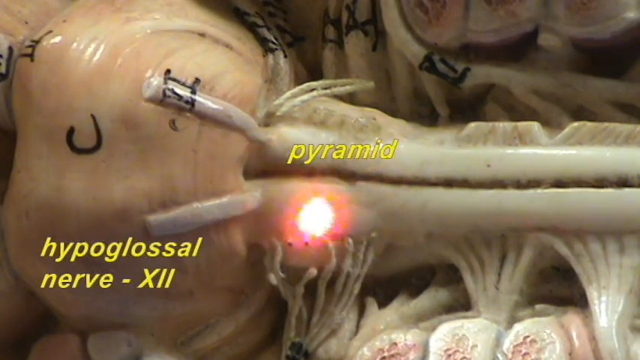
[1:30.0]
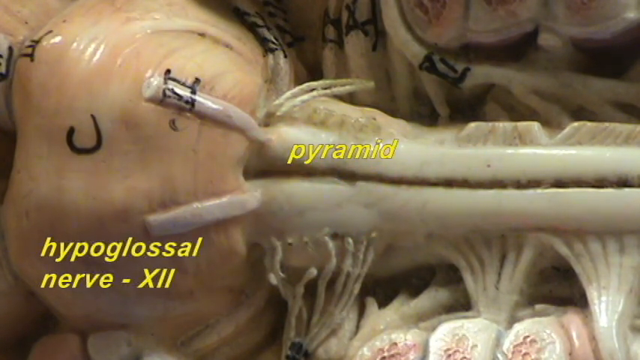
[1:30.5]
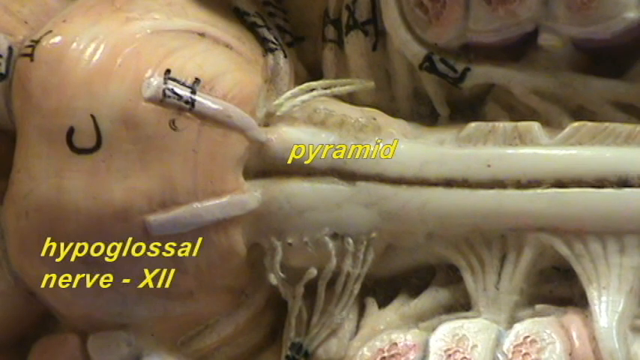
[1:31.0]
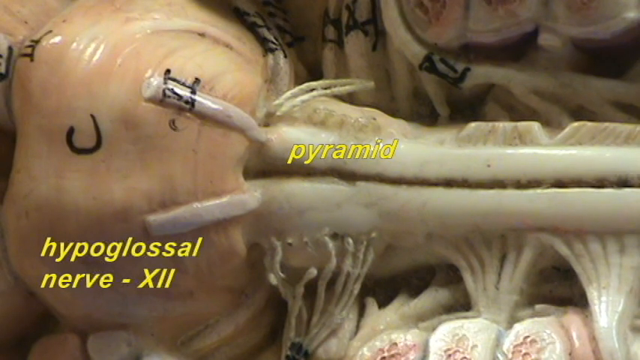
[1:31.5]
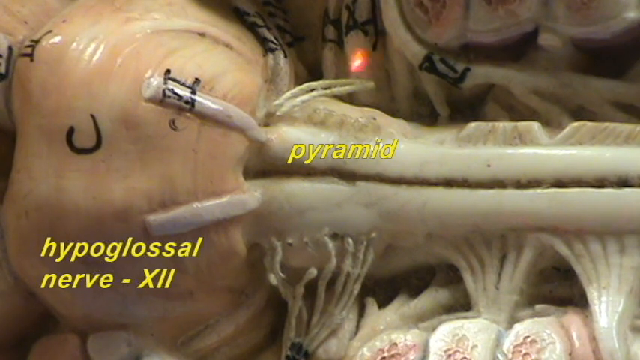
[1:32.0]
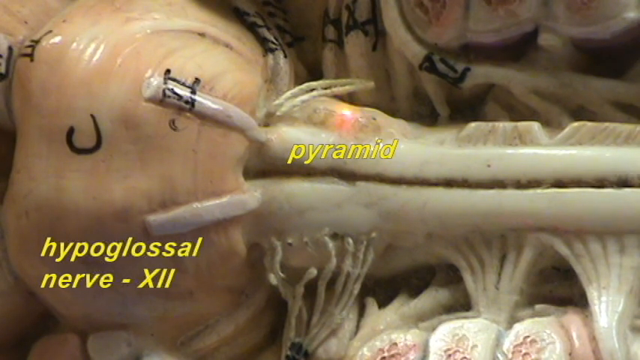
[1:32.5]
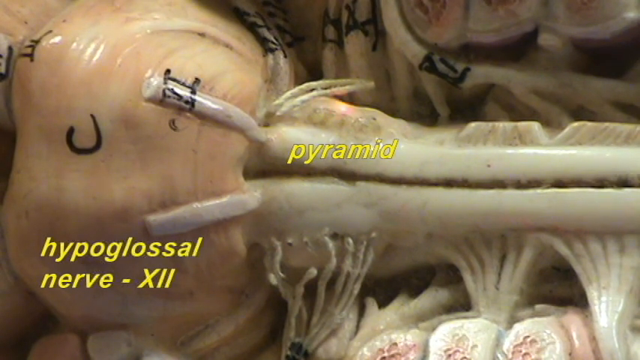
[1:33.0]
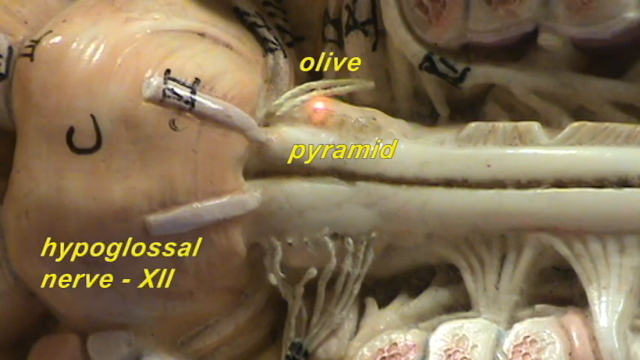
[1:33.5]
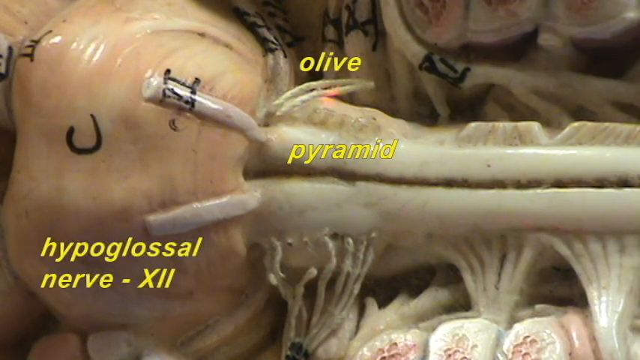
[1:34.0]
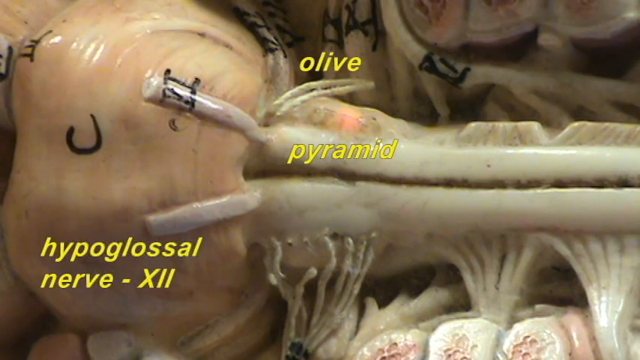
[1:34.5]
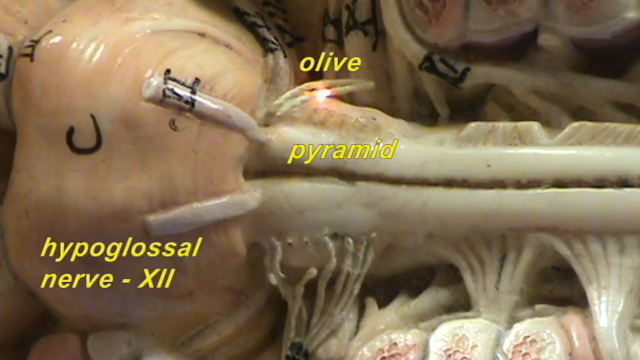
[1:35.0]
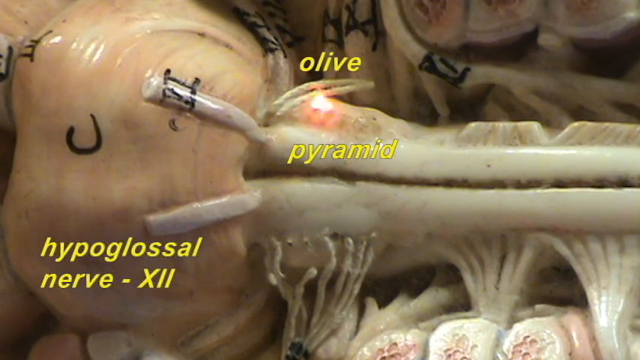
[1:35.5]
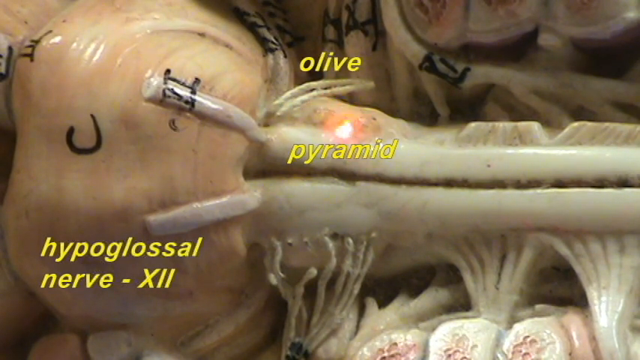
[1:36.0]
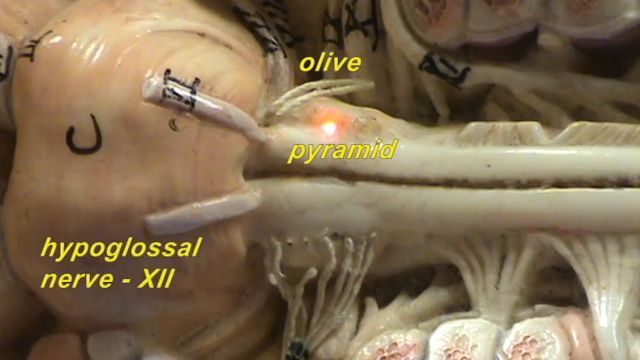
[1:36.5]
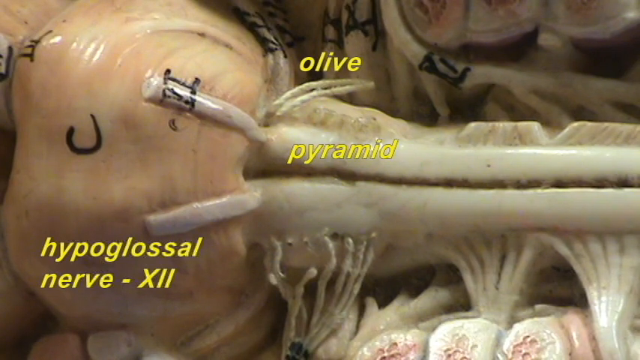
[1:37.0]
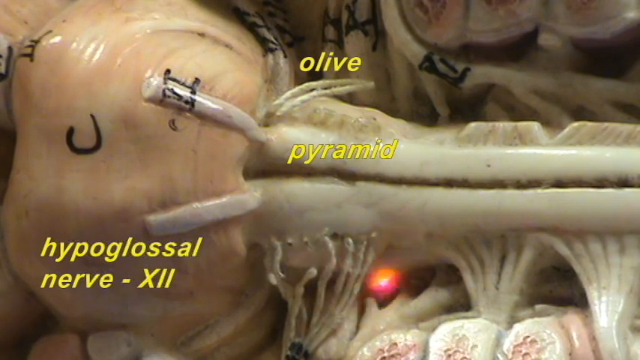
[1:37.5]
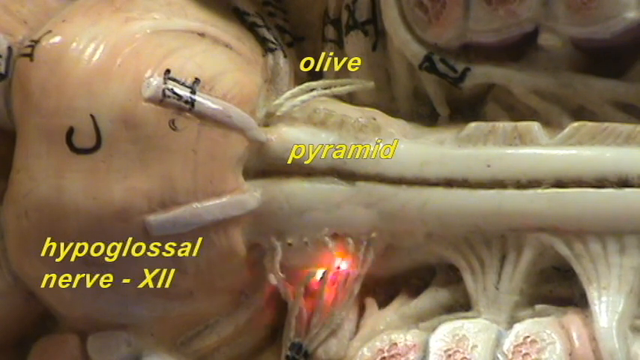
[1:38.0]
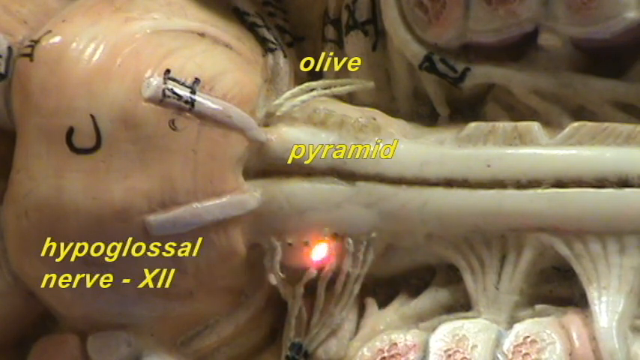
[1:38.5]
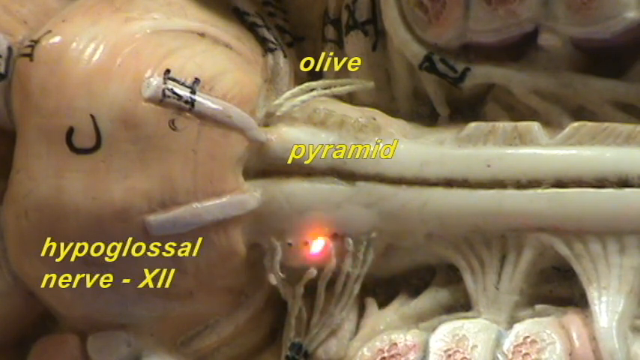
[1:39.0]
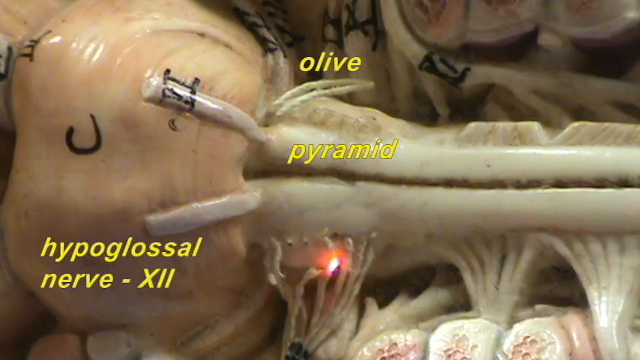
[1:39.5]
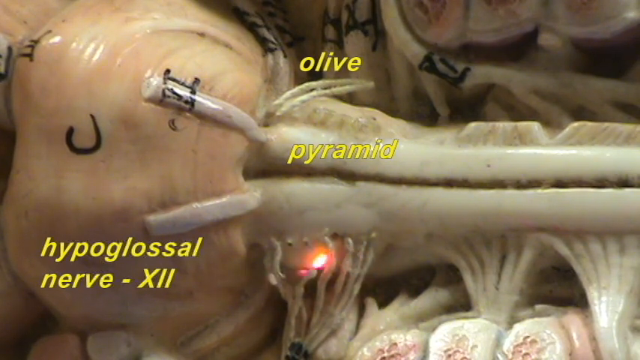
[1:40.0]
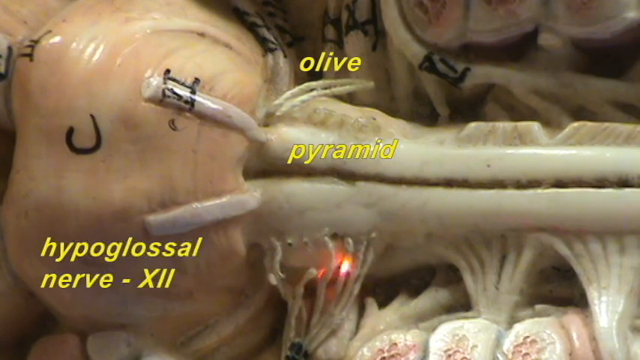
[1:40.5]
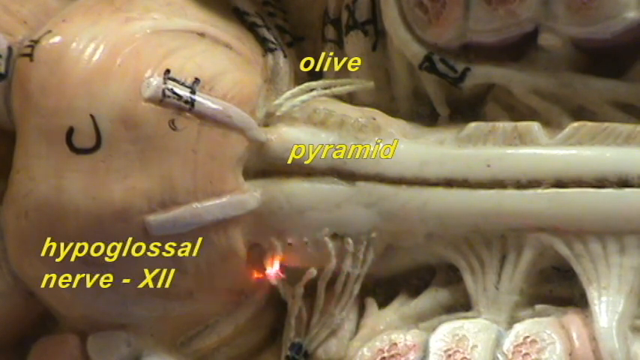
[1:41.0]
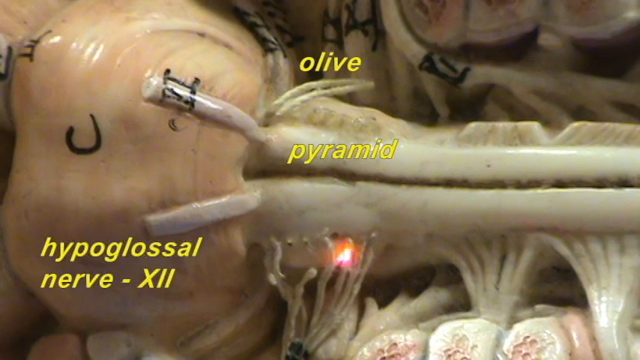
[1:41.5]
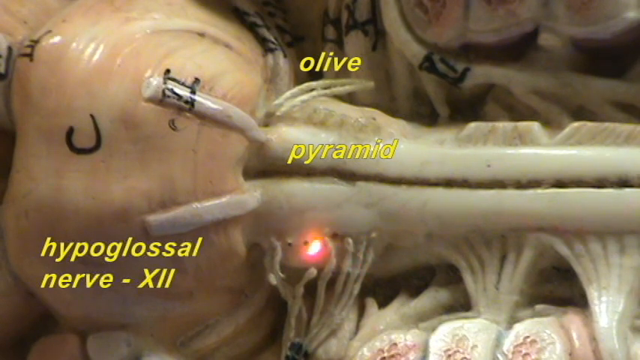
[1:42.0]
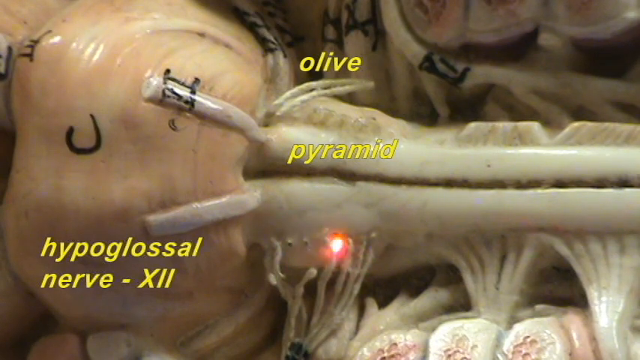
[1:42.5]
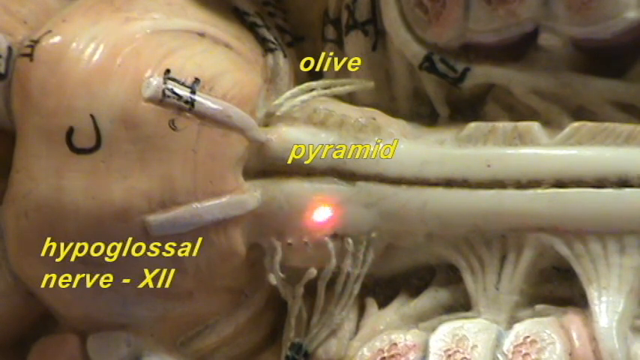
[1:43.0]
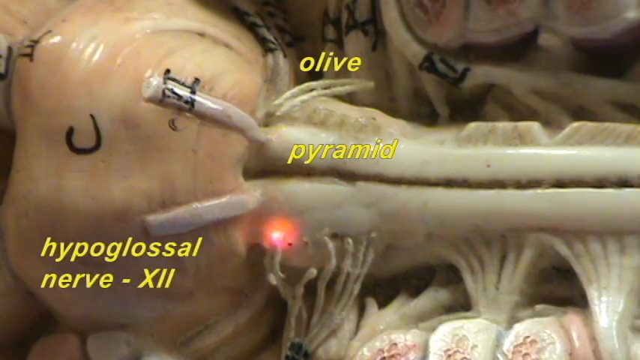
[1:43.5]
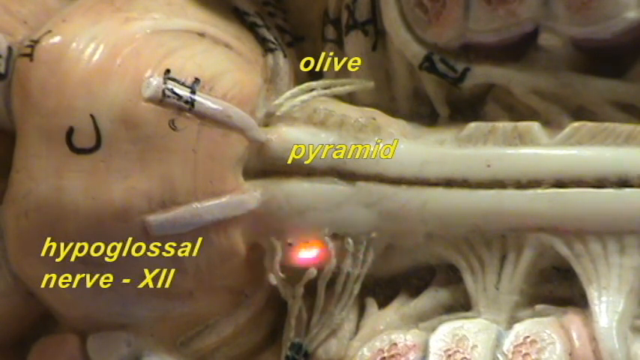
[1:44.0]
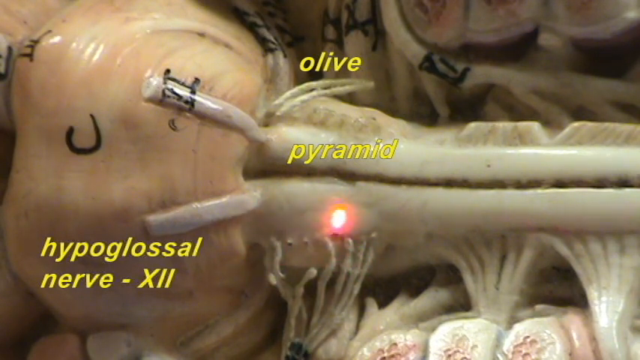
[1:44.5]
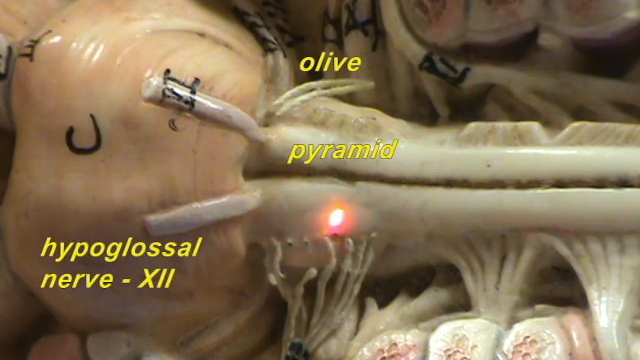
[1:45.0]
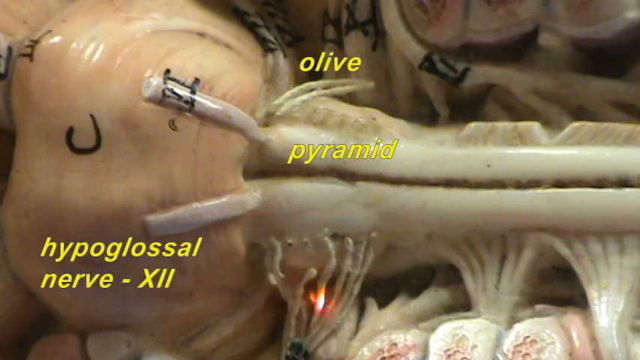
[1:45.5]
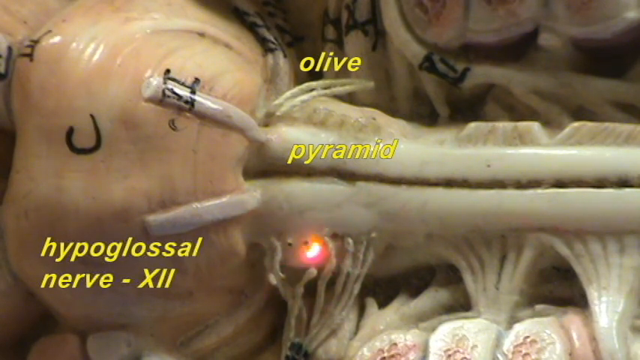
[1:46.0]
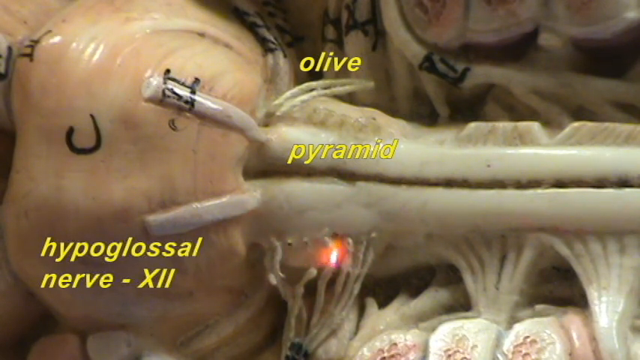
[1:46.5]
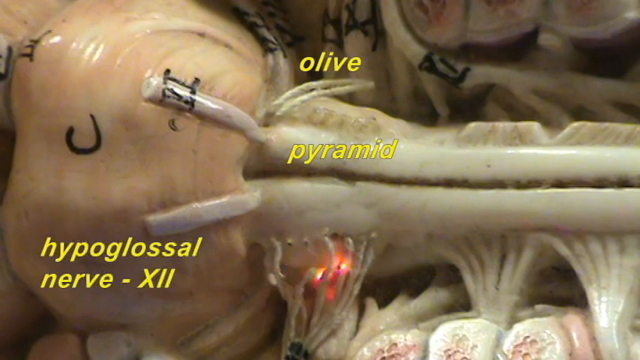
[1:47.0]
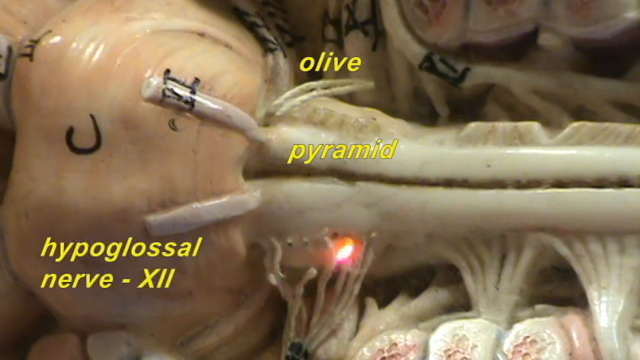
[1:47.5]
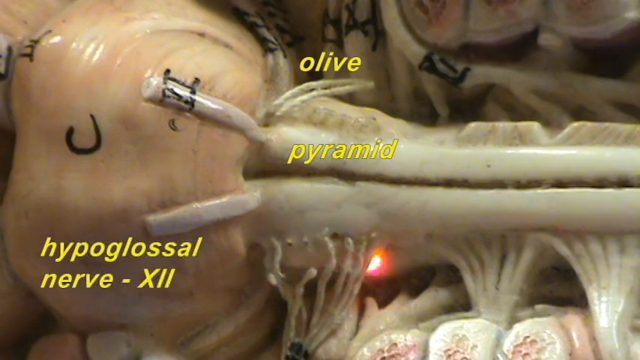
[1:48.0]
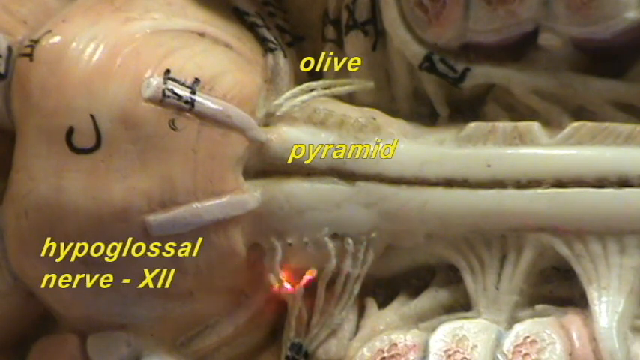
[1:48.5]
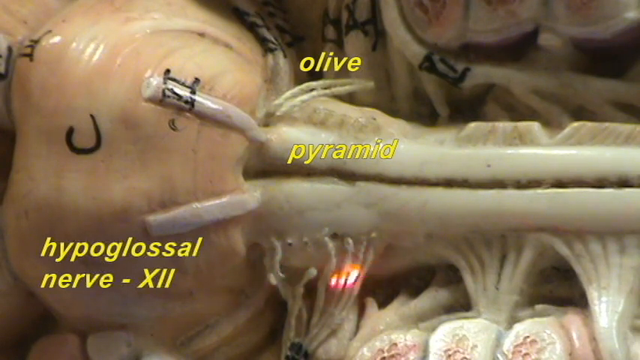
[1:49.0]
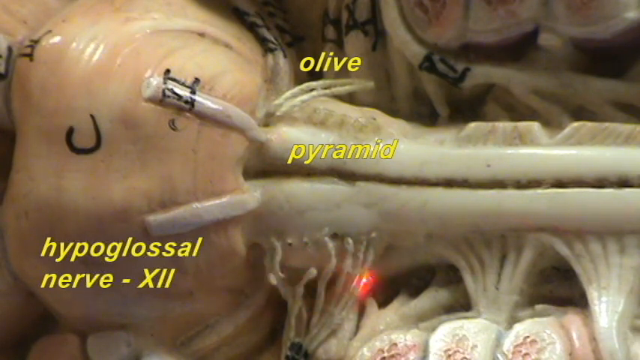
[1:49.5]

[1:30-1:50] A laser pointer points at different areas of a model of human anatomy, showing where the spinal cord meets the brain. Two words are on the screen: "pyramid" in the middle and "hypoglossal nerve XII" in the lower left. The pointer points to the upper right side of the spinal cord, just above the area labeled "olive." The pointer then moves toward the bottom center of the screen, rapidly moving back and forth over the spinal cord, where a nerve looks to be attached and going off into the body.